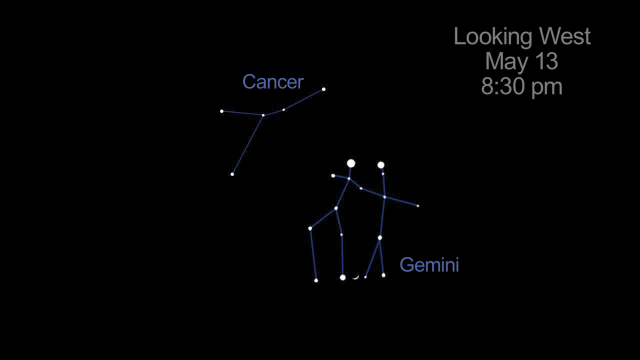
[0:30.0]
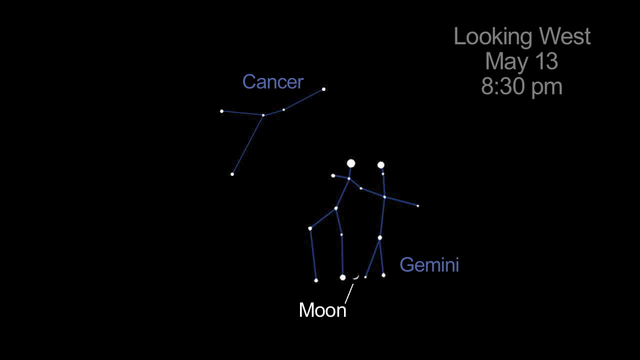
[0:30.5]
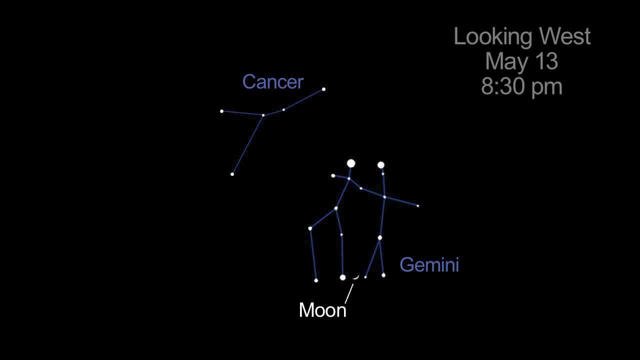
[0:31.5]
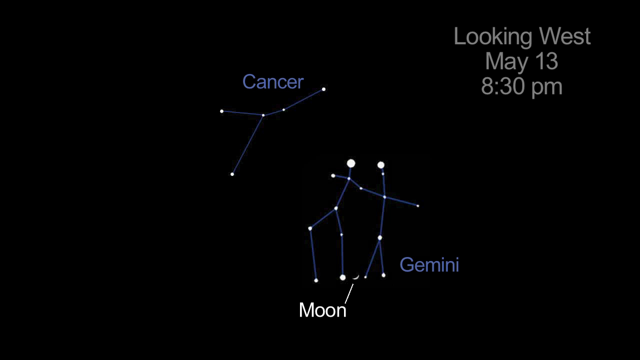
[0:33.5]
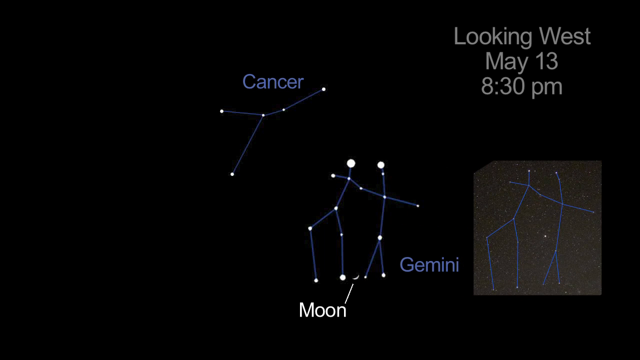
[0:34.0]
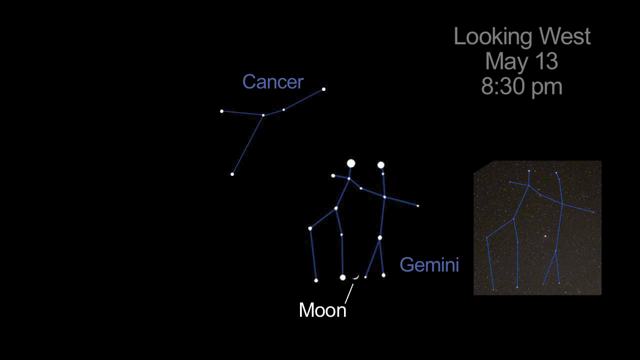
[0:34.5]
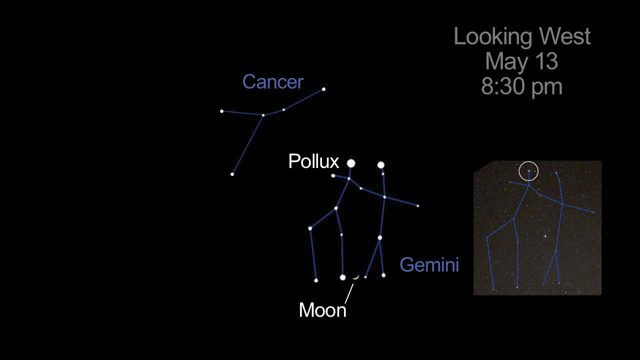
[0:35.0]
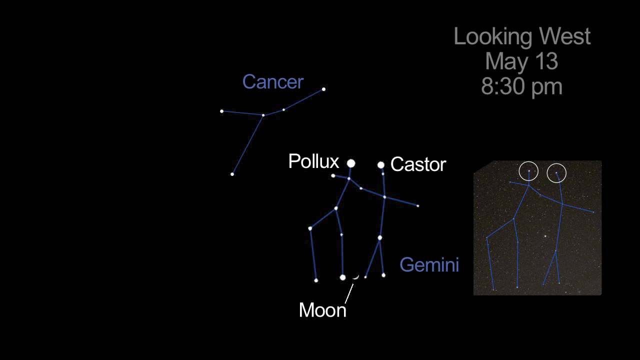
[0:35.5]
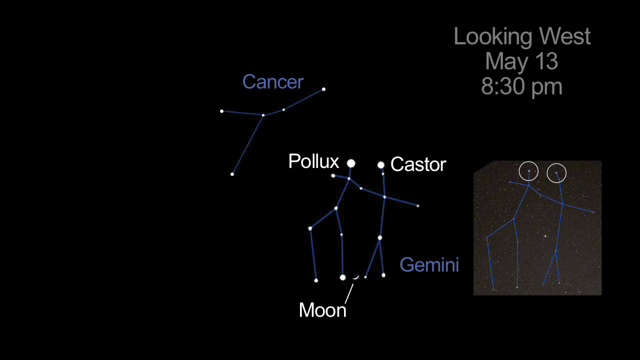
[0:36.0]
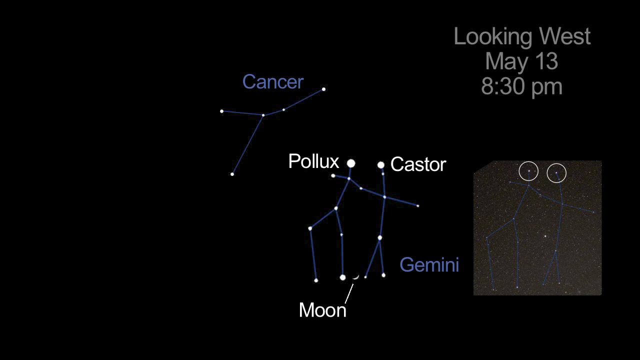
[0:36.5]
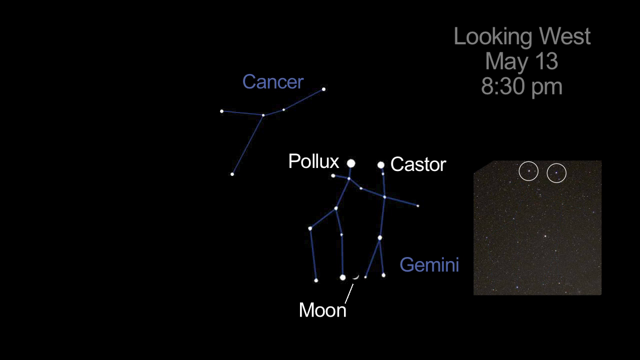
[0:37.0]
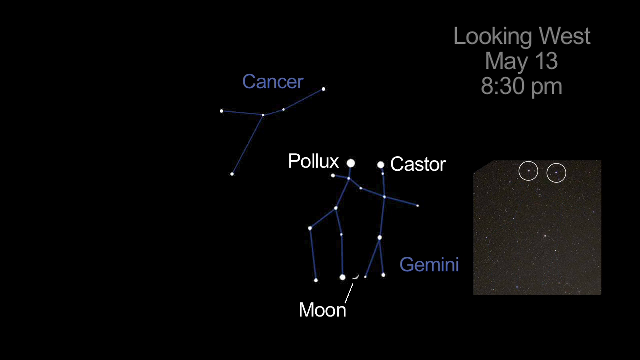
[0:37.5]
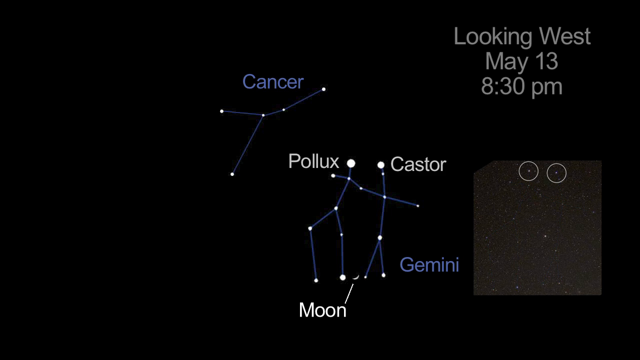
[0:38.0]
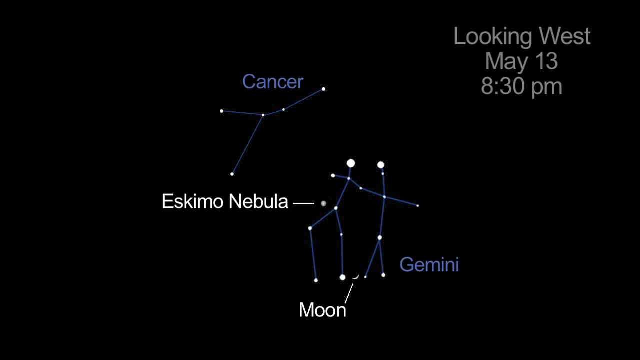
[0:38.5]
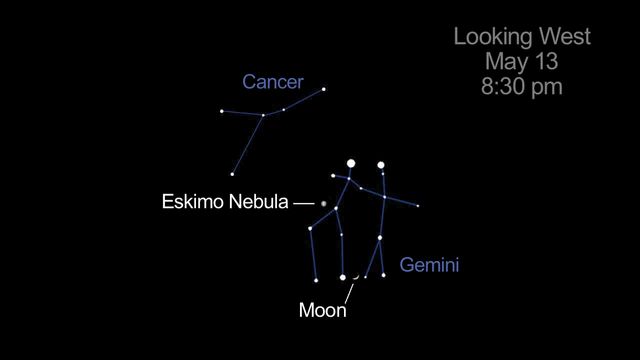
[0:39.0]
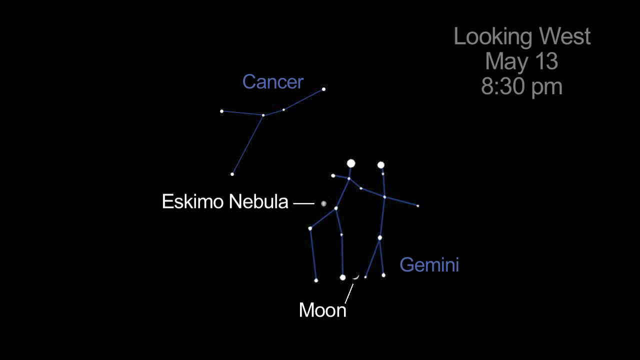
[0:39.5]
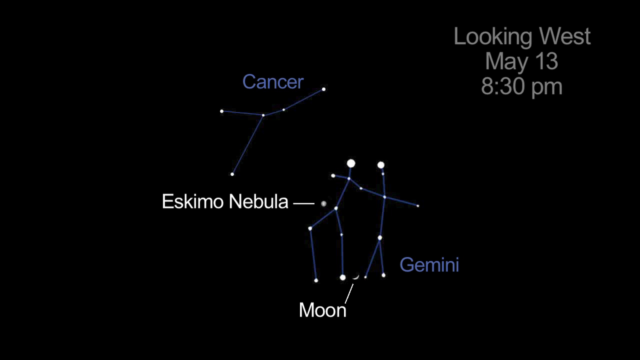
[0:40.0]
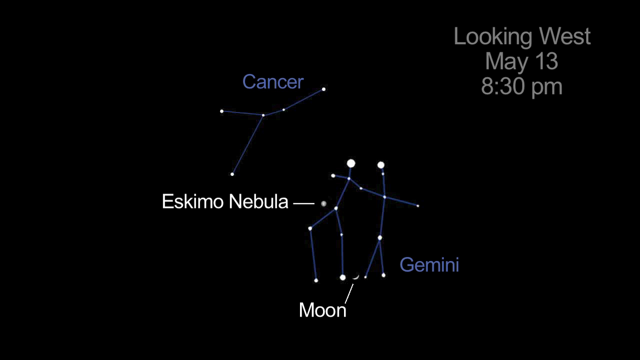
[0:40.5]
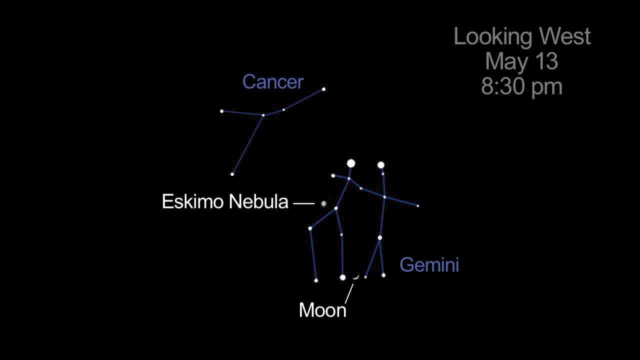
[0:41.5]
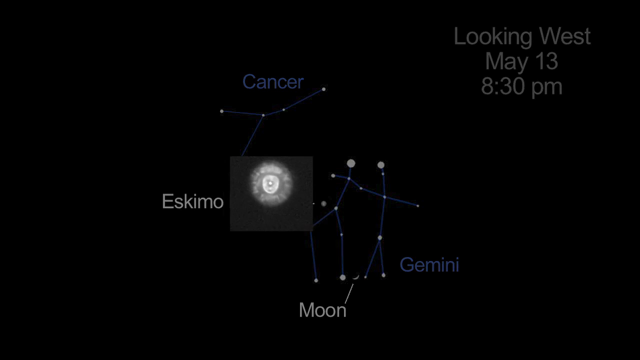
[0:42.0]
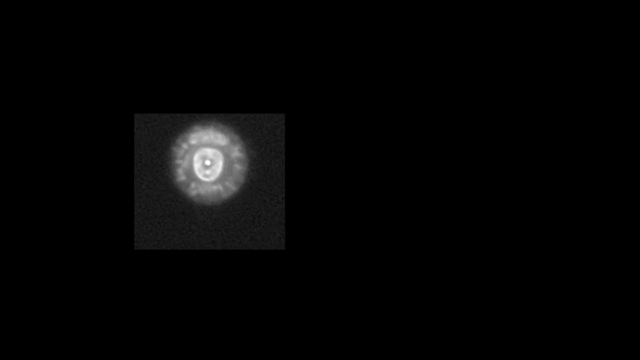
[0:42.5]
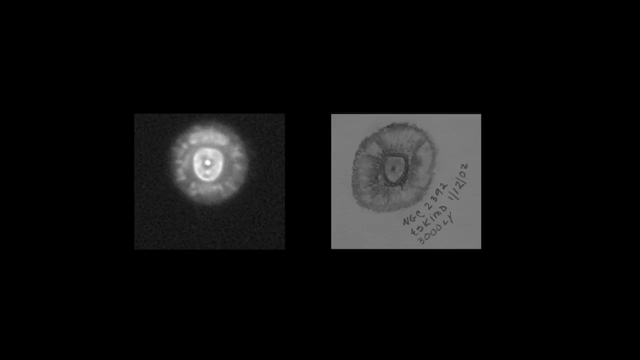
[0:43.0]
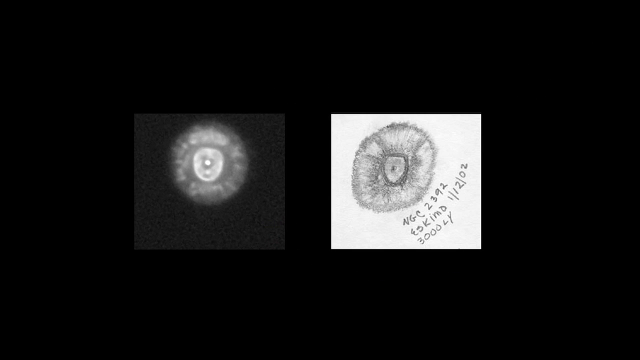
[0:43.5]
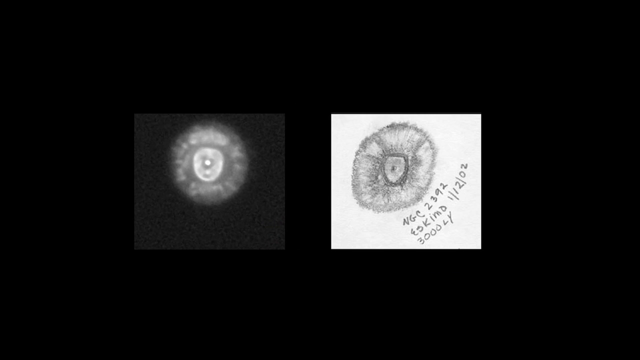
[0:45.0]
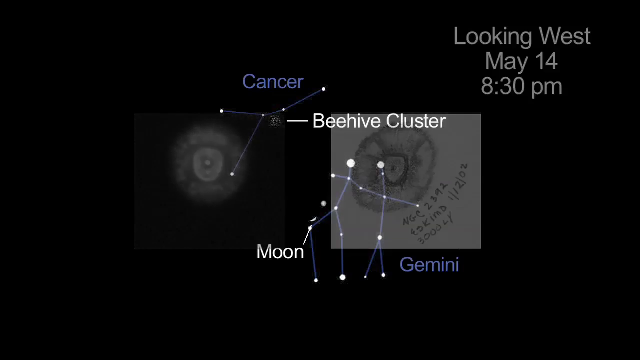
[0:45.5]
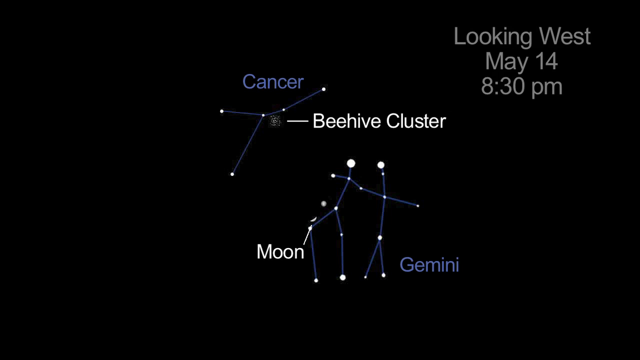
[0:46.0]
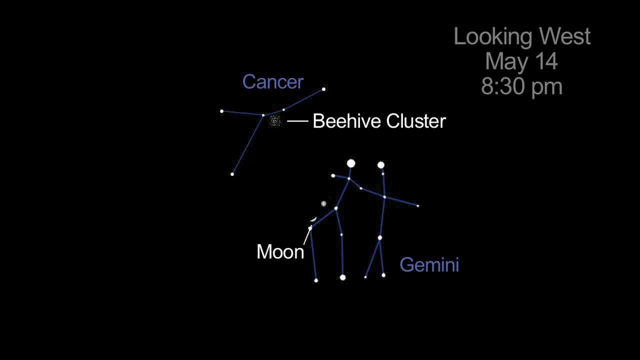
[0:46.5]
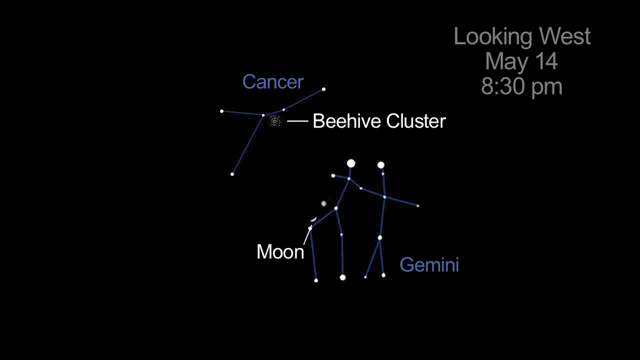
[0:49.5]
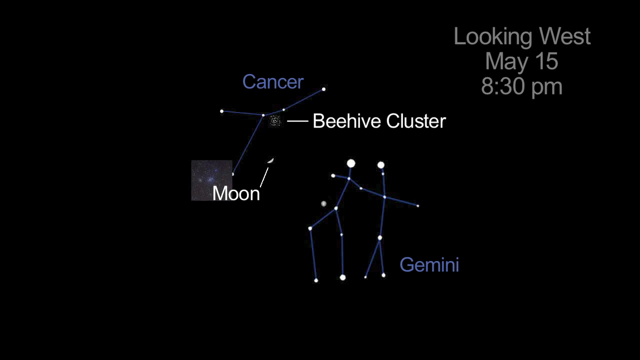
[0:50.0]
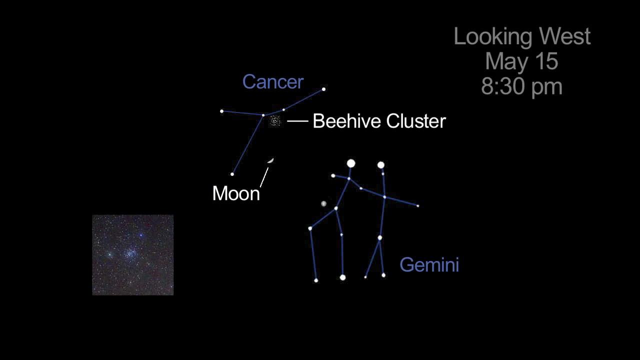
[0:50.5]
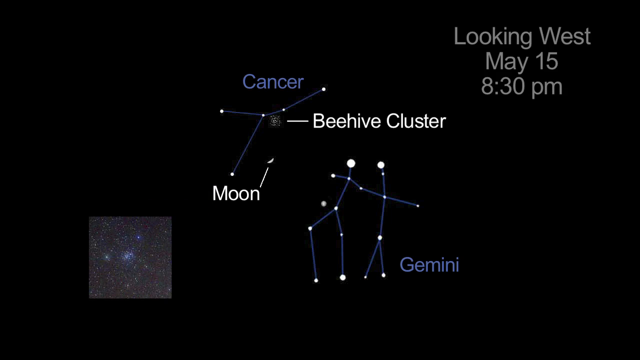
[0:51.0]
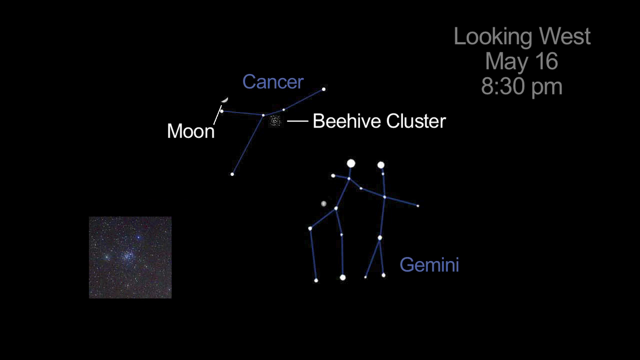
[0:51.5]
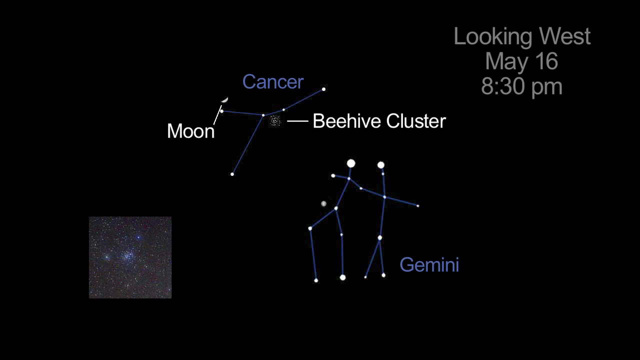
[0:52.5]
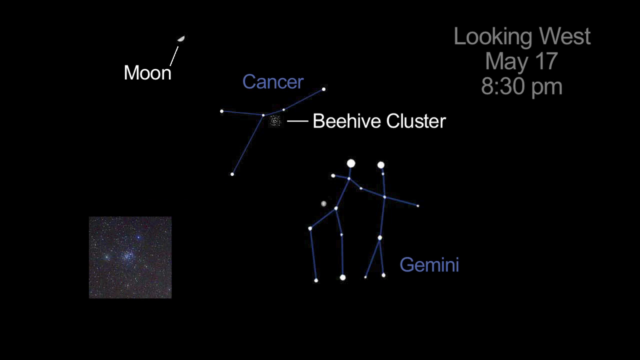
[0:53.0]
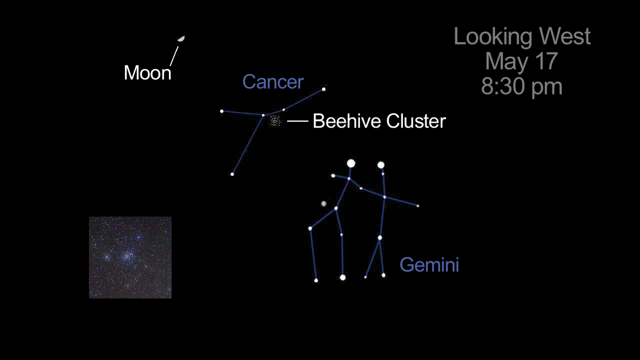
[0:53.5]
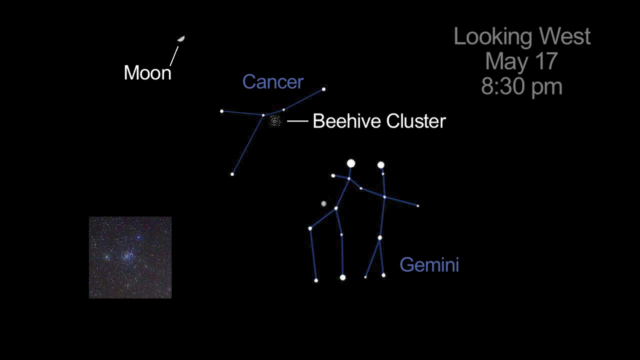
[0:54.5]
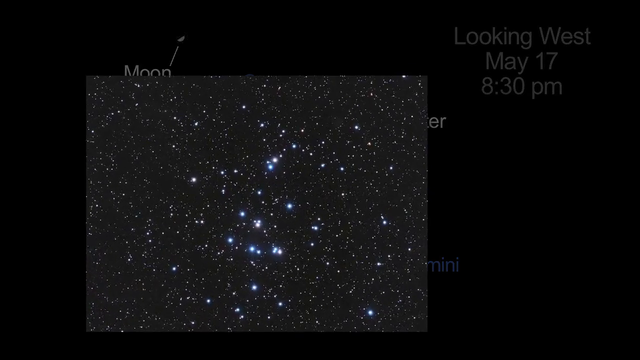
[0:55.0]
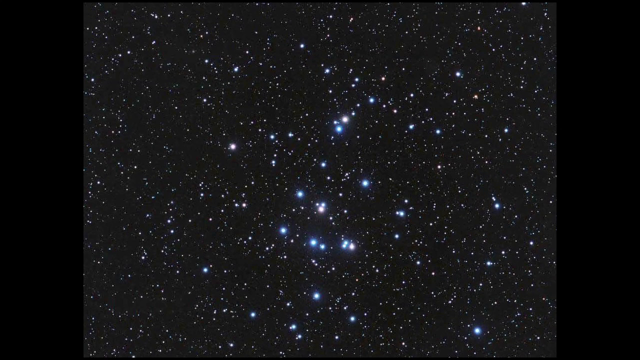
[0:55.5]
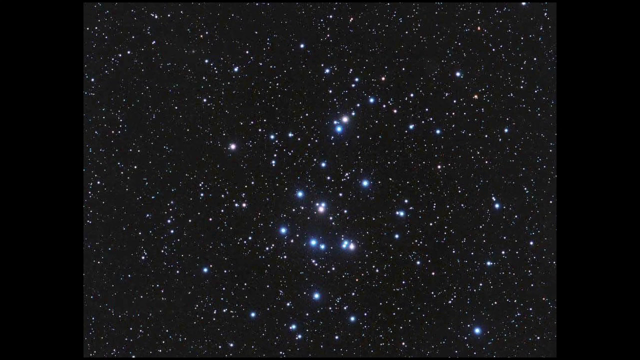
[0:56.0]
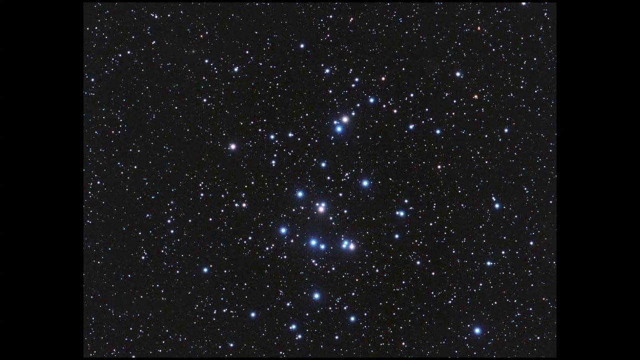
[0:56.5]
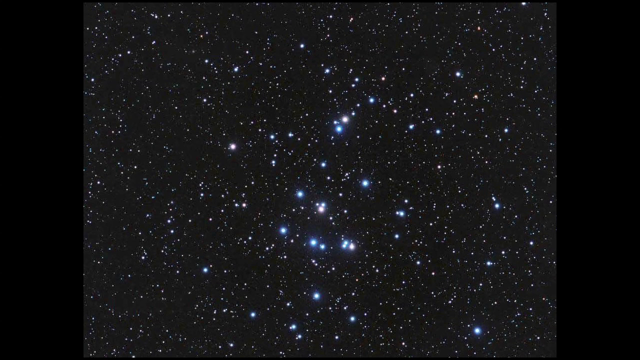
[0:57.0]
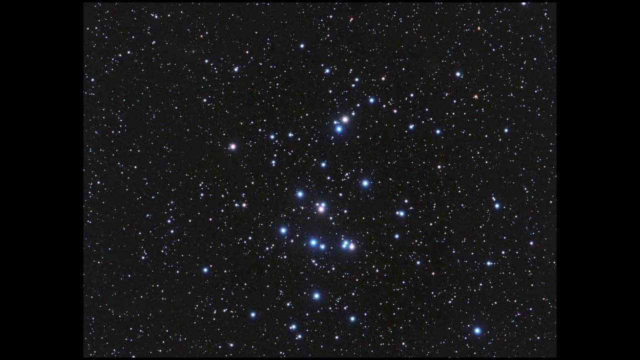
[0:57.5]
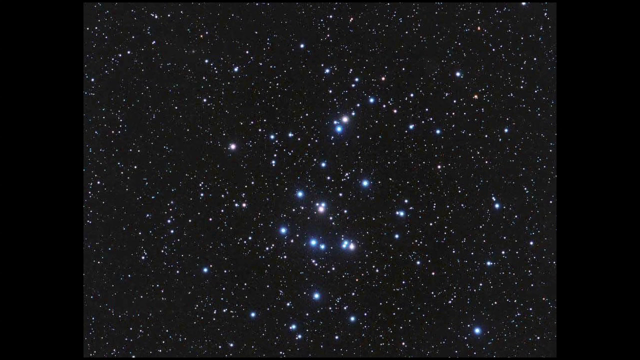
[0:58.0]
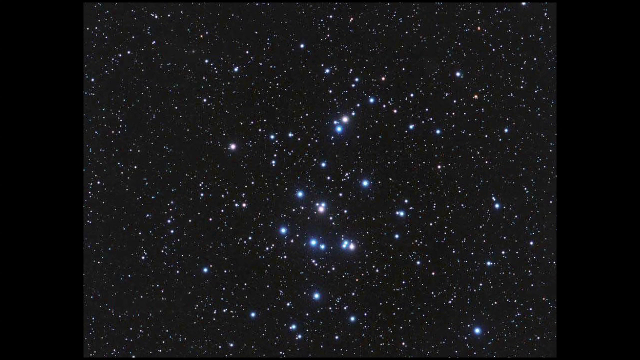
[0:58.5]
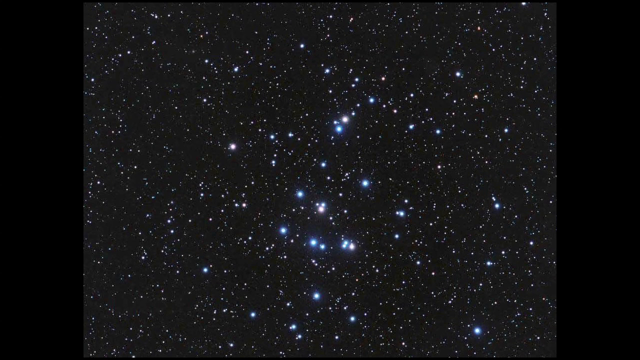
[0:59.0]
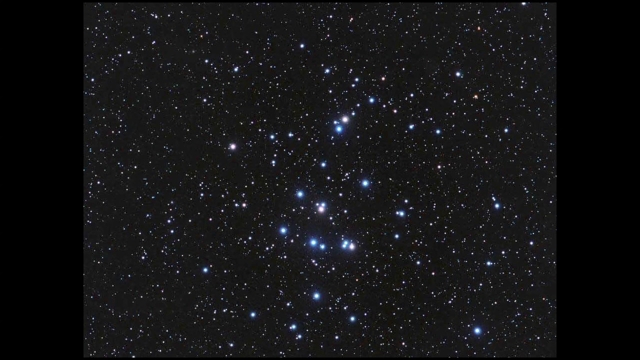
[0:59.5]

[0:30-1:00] A black background shows two illustrated constellations: Cancer, with five stars, and Gemini, which looks like two people holding hands. White text at the top right reads "Looking West, May 13, 8.30 p.m." A very tiny crescent moon appears within Gemini's constellation, between what appear to be two legs. White text appears next to Gemini reading "Eskimo Nebula." Two new black-and-white images pop up, looking like circles within circles. The image on the right has a date of "1-1202" and letters and numbers reading "NGC 2392"; below that is "Eskimo," and below the word Eskimo is "3000LY." The view switches back to the constellations Cancer and Gemini, showing a little cluster of something right underneath Cancer, labeled "Beehive Cluster" in white text.